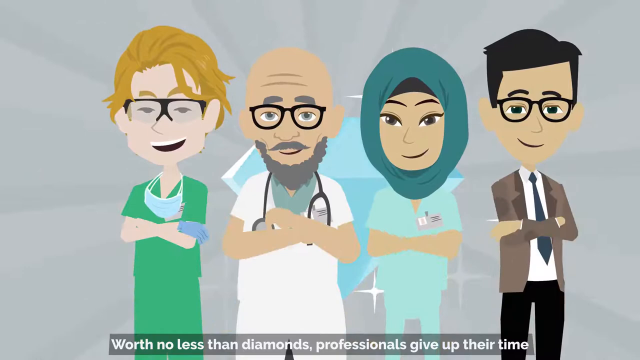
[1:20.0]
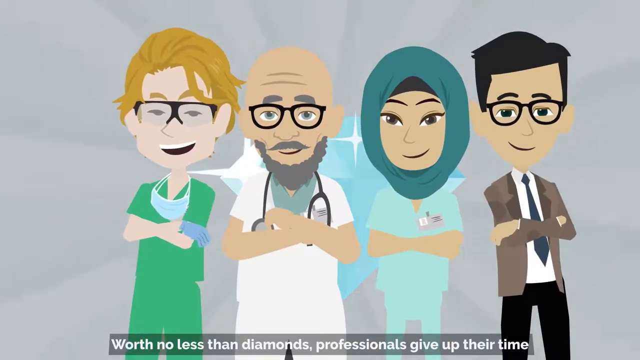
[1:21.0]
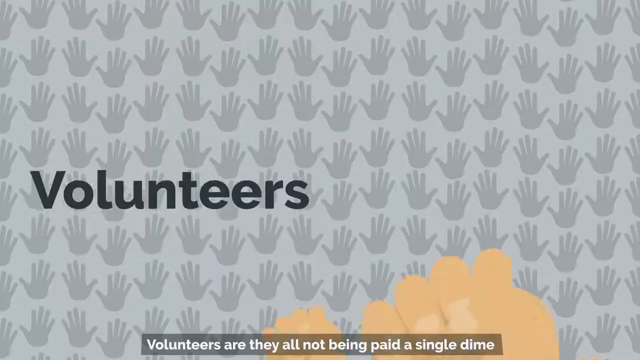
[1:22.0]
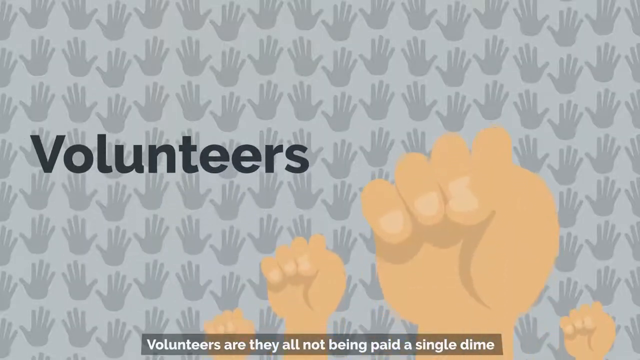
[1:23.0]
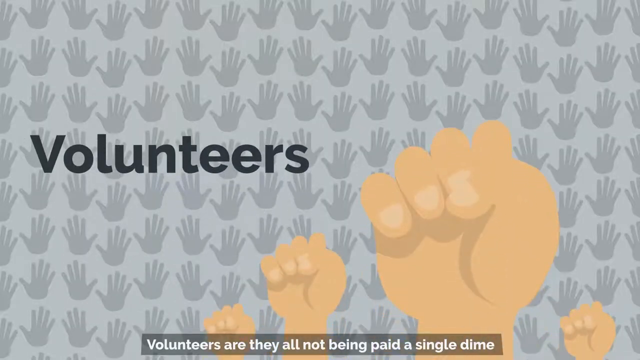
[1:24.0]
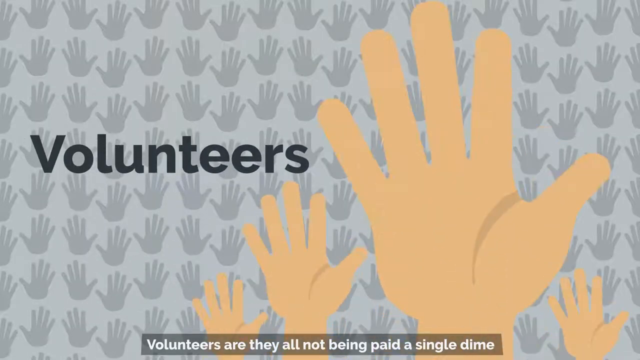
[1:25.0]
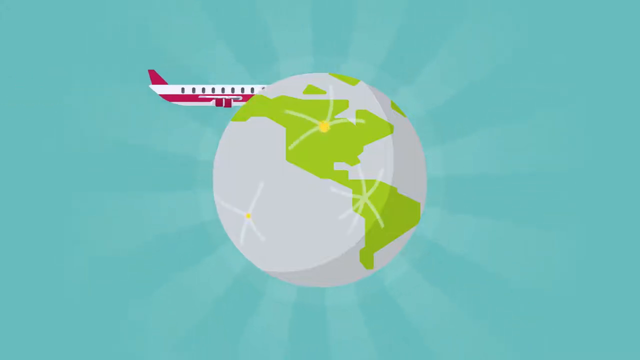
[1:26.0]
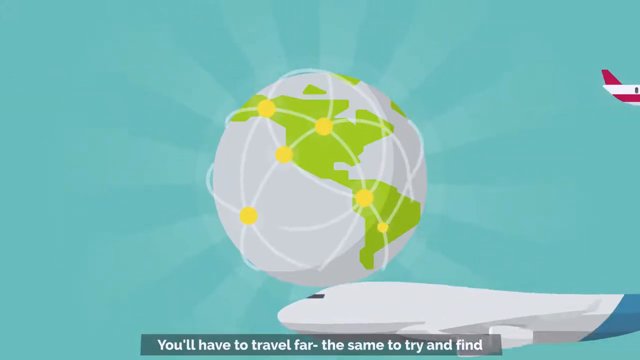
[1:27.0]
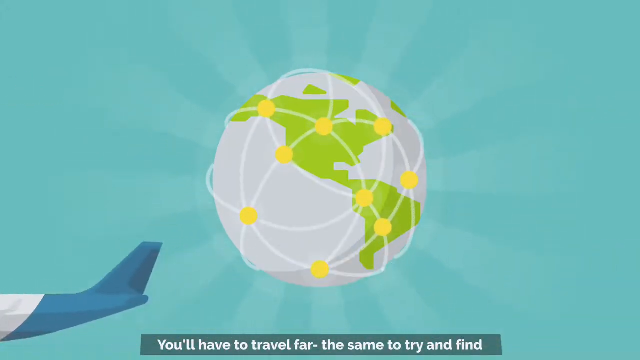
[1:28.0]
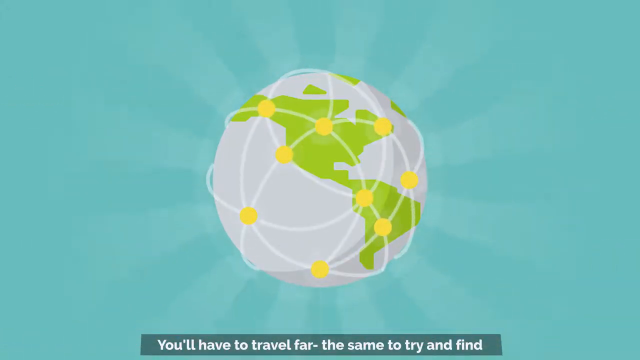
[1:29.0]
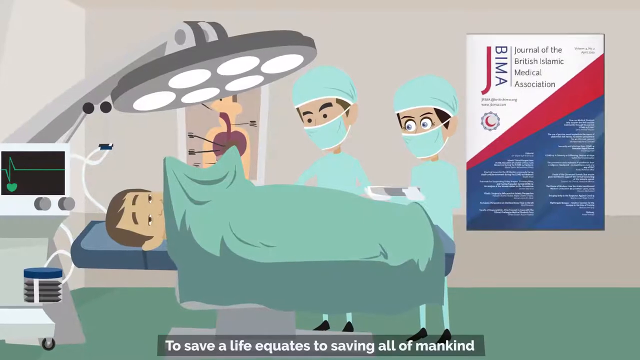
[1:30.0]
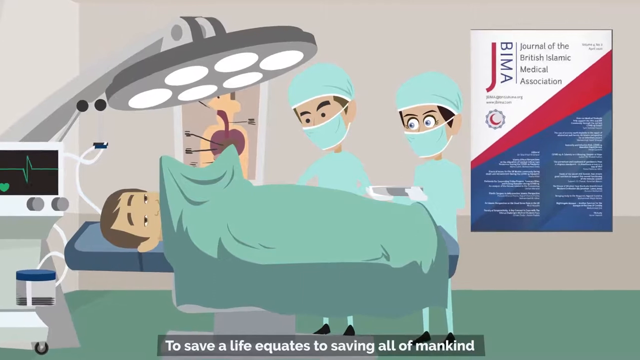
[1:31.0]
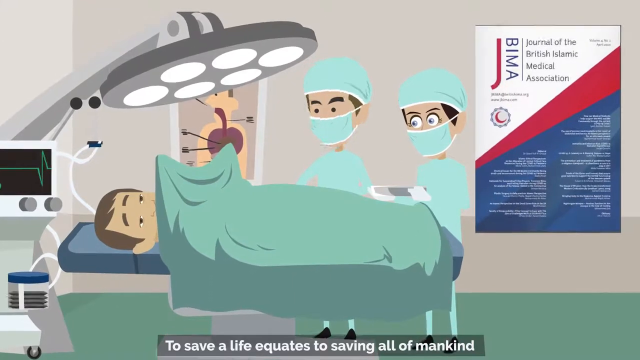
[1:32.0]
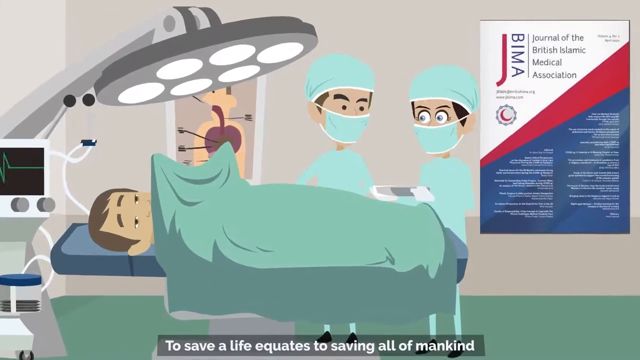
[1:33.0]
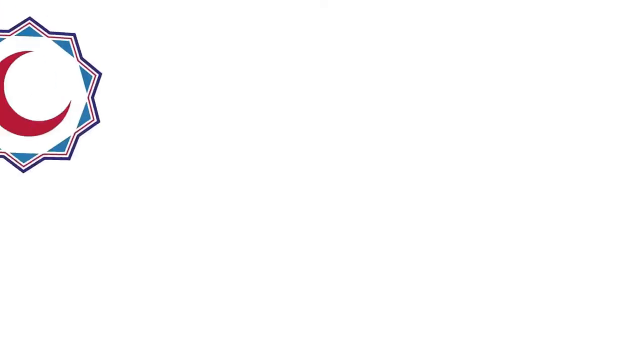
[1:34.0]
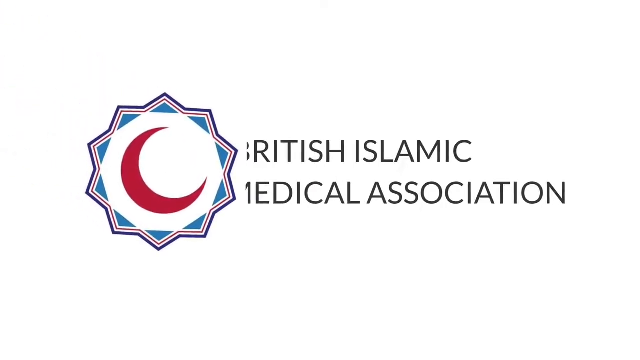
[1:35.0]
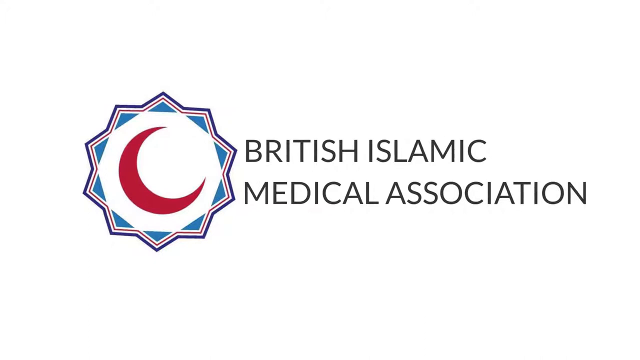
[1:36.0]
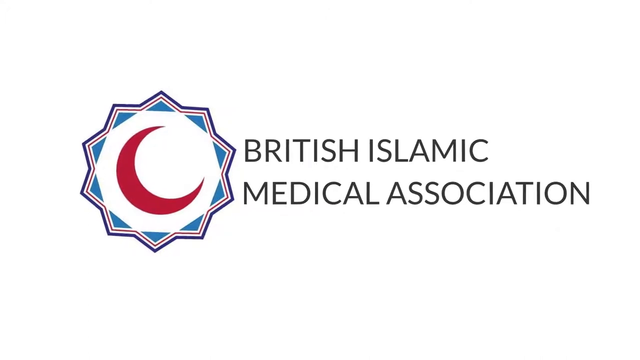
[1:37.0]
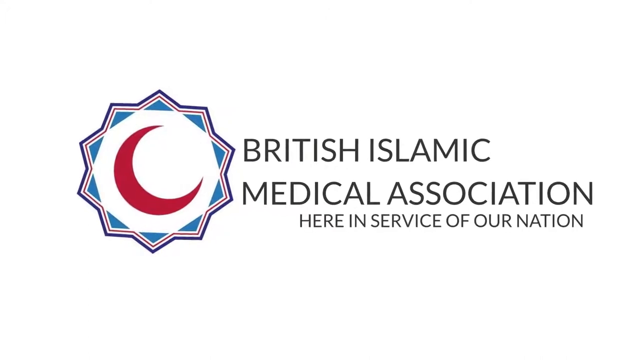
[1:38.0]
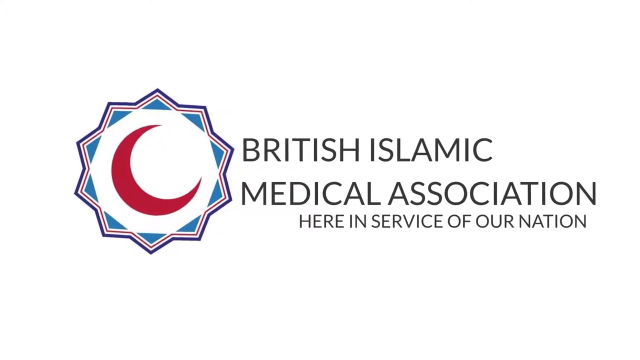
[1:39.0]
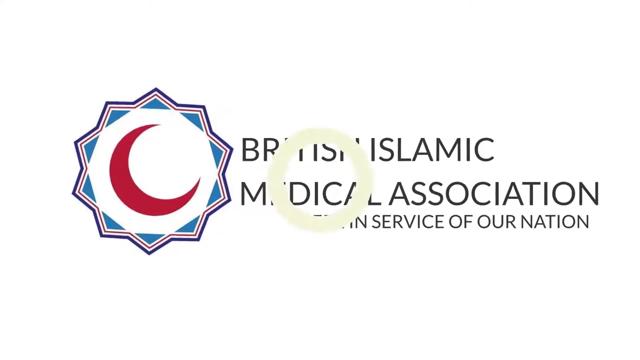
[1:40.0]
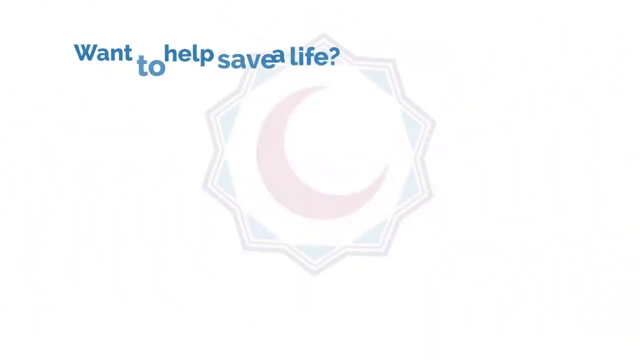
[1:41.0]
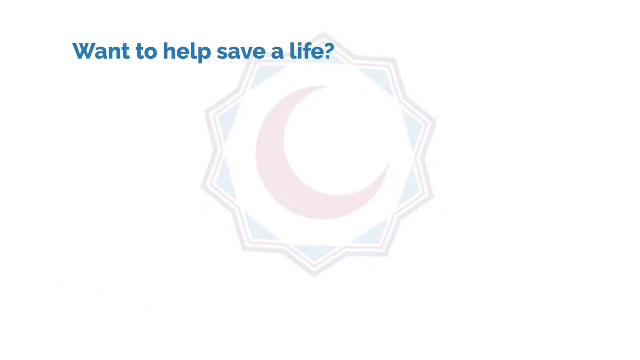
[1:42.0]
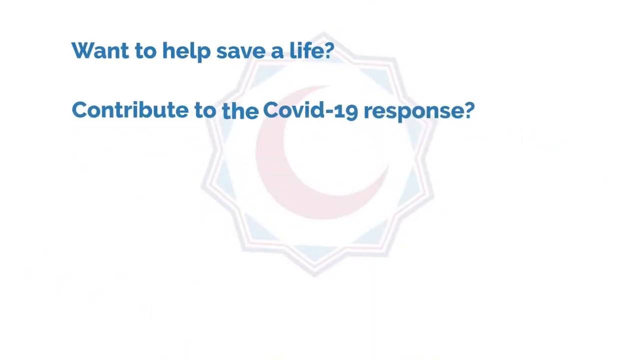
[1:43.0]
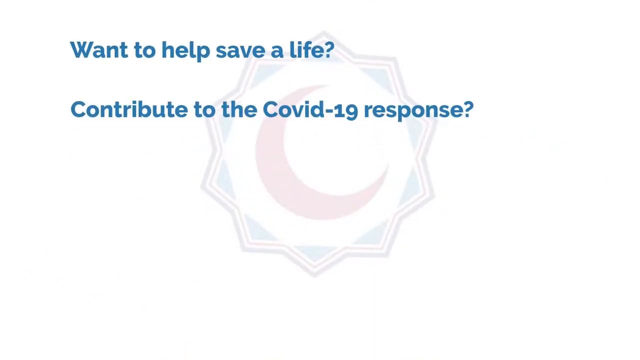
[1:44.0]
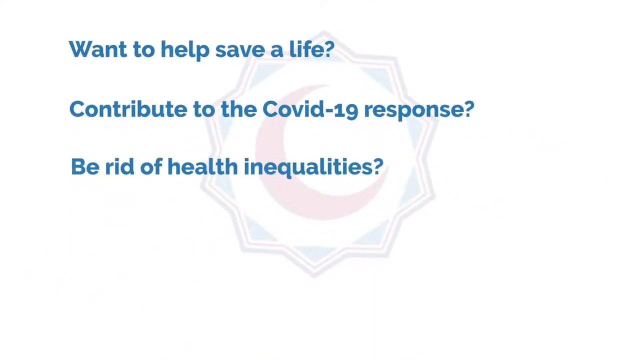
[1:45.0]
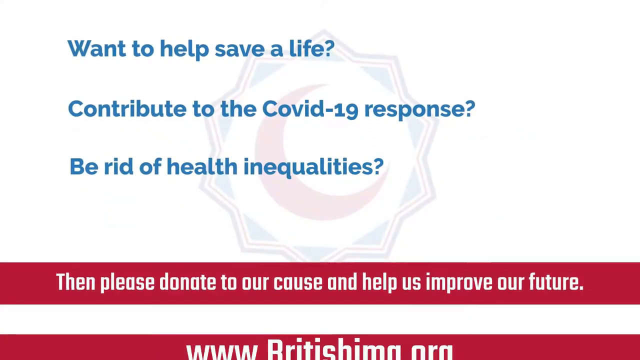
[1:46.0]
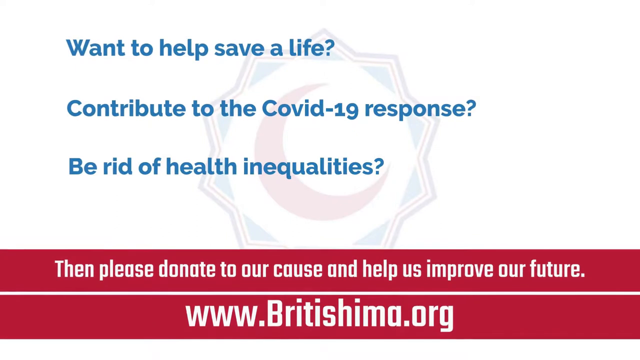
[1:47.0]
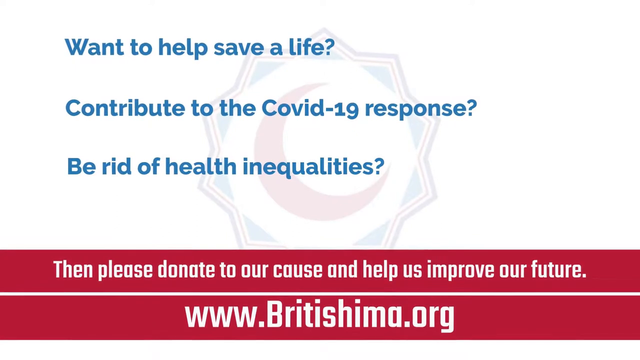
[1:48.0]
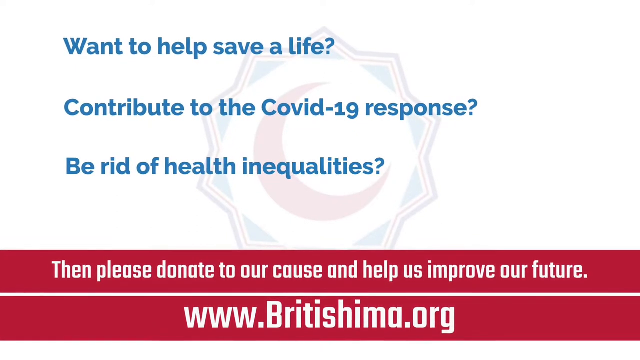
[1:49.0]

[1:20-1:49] Explanatory text in a black sans serif font appears, with dozens of gray hands shown against a lighter gray background behind it. The text reads "Volunteers", and several raised hands appear to the right of the image. The image then changes to a cartoon globe against a turquoise background. A red and white jet plane flies in at the globe from the left, and another plane flies in the foreground from right to left, crossing in front of the globe. The globe contains a number of golden dots connected by arced lines. The scene then changes to two surgeons operating on a man in an operating theater. An inset in the upper right shows the title page of the Journal of the British Islamic Medical Association, abbreviated as JBIMA; the journal appears in white, crimson and blue and contains the crescent moon symbol seen at the beginning of the video. The operation continues with the surgeons speaking to each other. Sponsorship then appears on the screen: "British Islamic Medical Association here in service of our nation." The video asks "Want to help save a life?", "Want to contribute to COVID-19 response?" and "Want to be rid of health inequalities?", and asks viewers to donate to the cause and help improve the future.